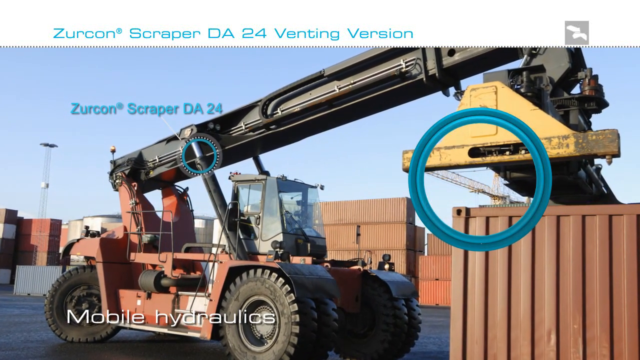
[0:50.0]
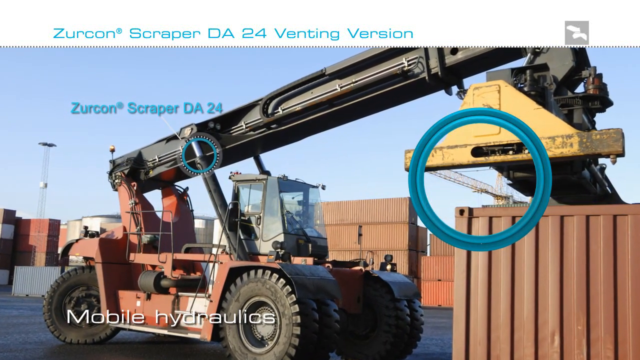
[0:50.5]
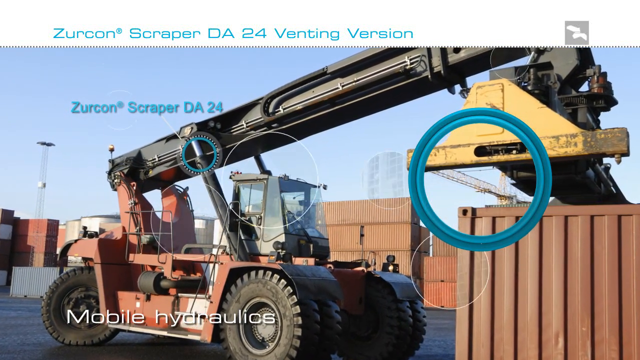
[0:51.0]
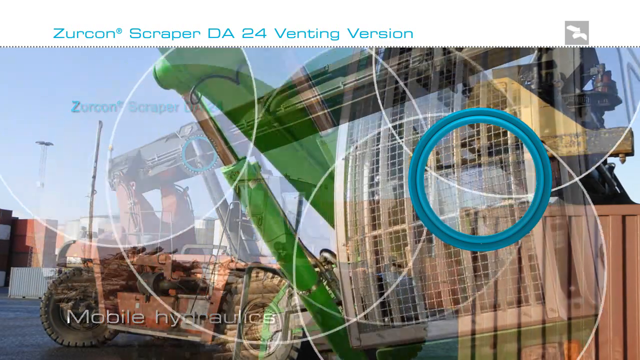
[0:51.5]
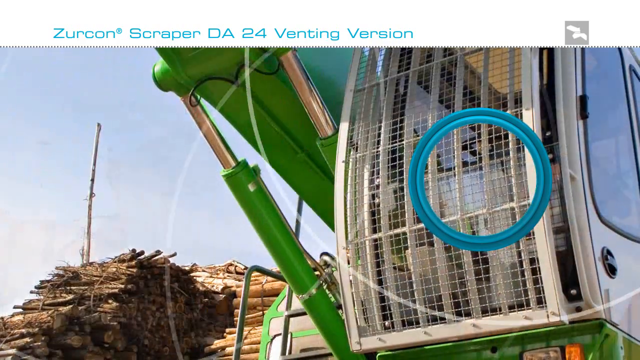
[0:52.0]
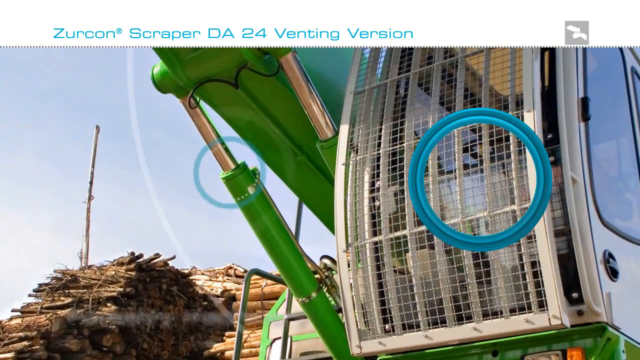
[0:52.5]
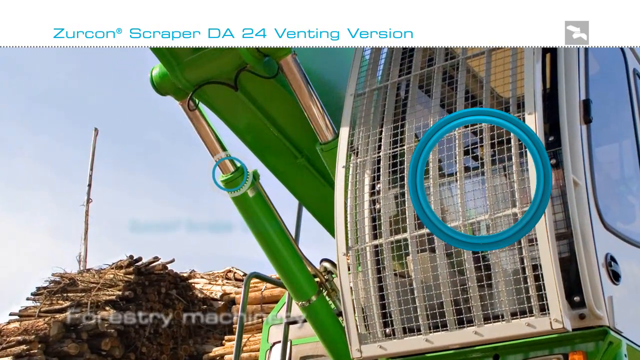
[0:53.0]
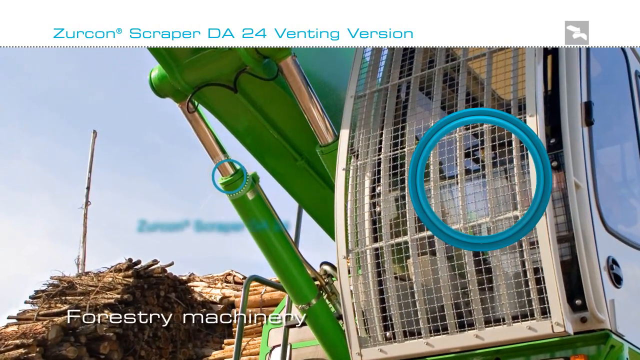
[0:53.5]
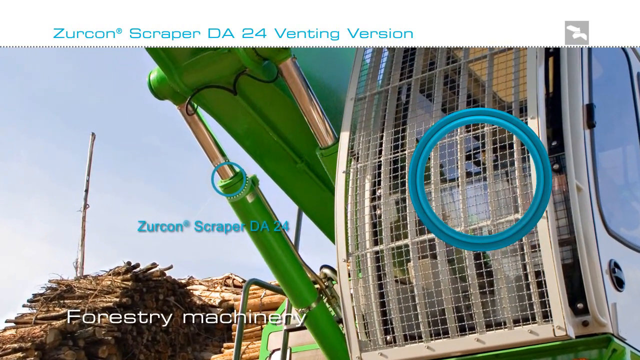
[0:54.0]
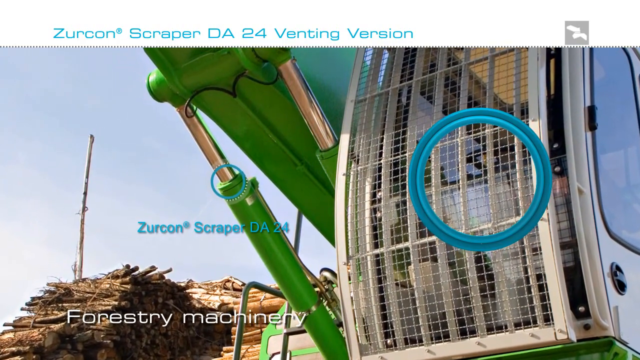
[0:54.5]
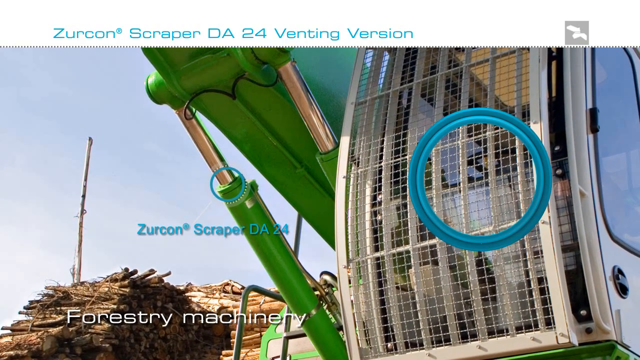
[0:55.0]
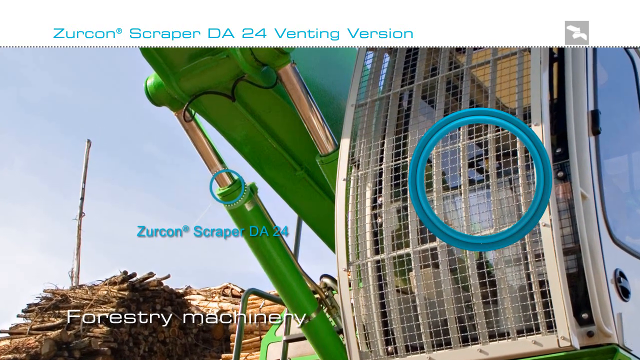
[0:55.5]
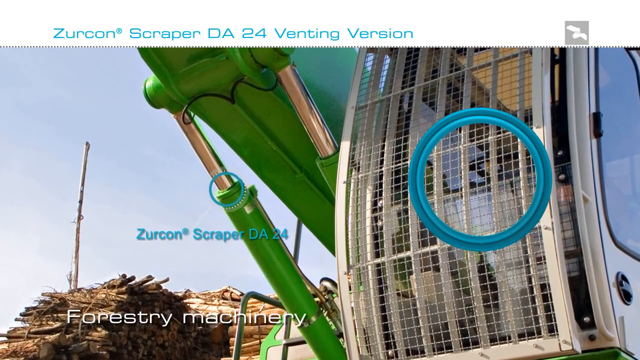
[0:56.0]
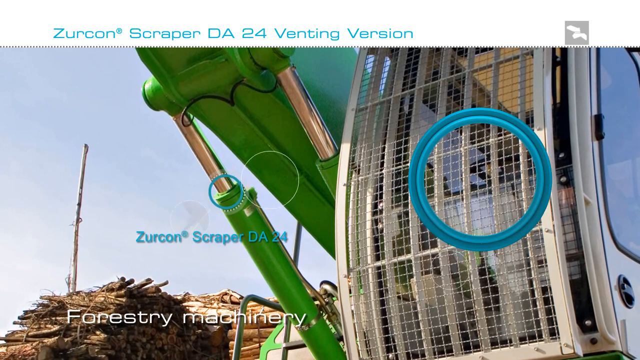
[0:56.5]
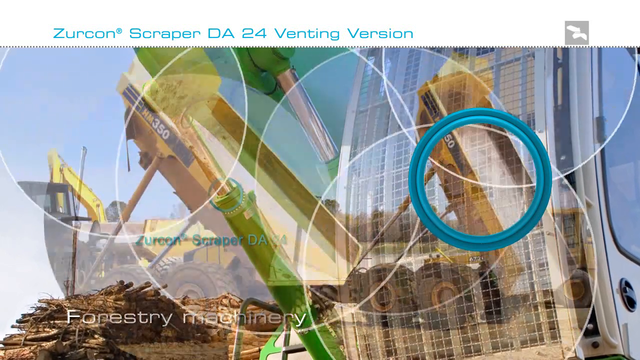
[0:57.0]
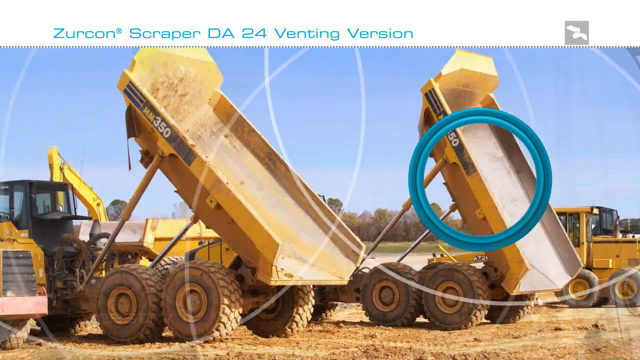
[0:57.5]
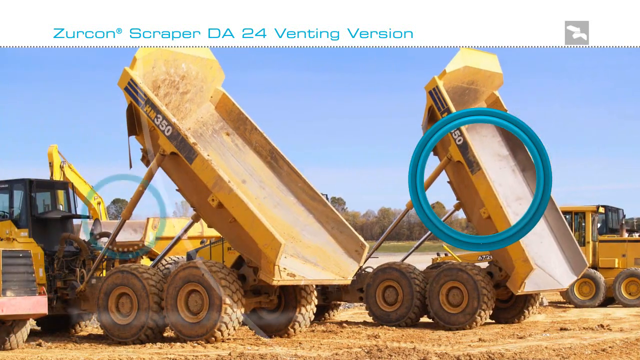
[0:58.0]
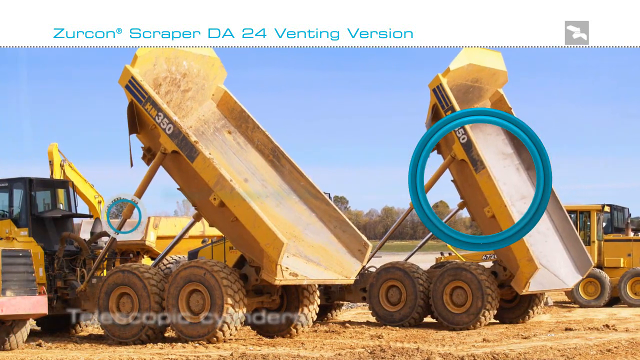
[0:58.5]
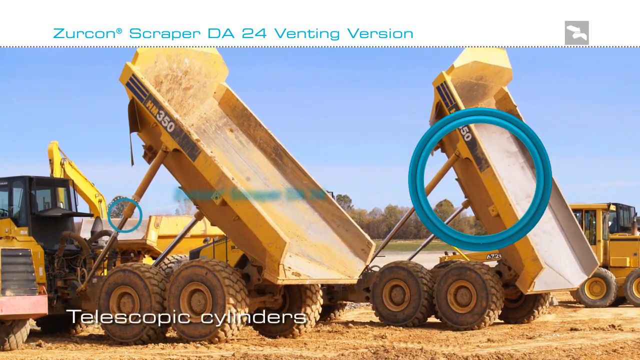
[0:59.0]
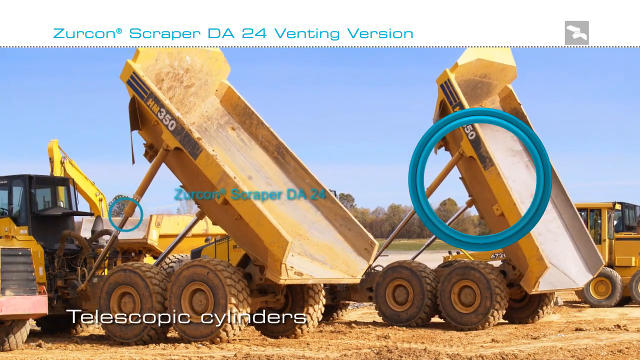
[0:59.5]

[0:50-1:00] A red vehicle that looks like a tractor has a huge black arm on top, with a yellow part that seems to be attached toward the end. Another vehicle has white compartments and an arm that seems to be green with some silver on it. Text reads "Zircon Scraper DA24", and a blue circle is in the forefront. The video then cuts to more vehicles that look like yellow tractors, whose beds are being raised by hydraulics.